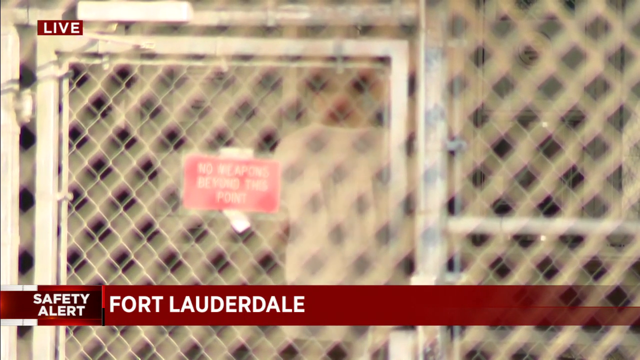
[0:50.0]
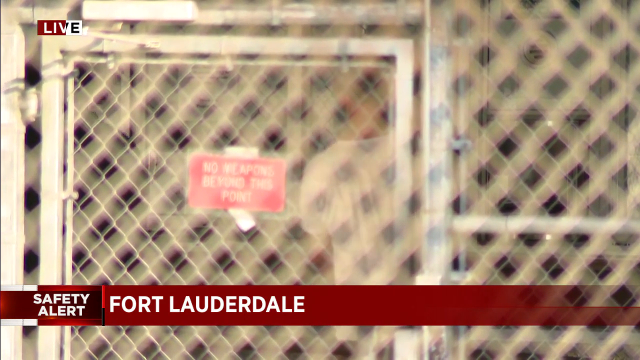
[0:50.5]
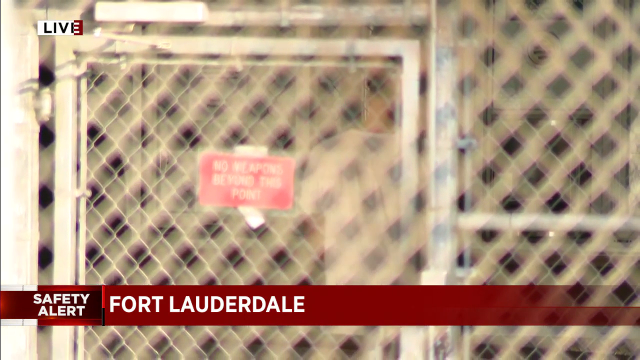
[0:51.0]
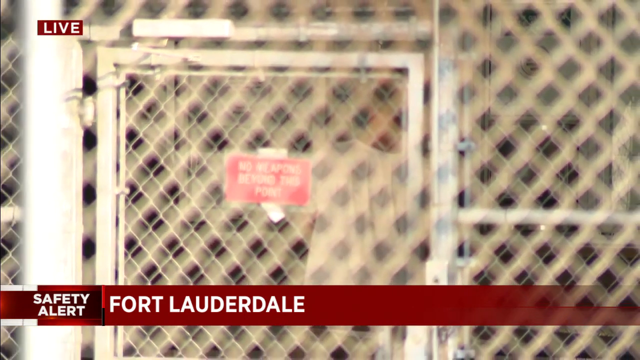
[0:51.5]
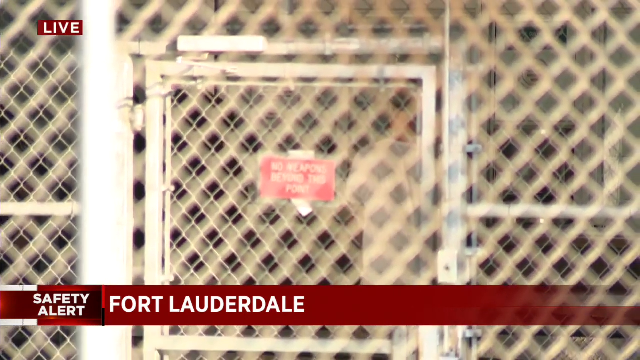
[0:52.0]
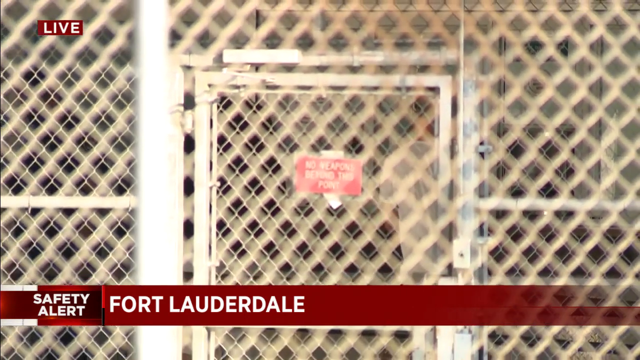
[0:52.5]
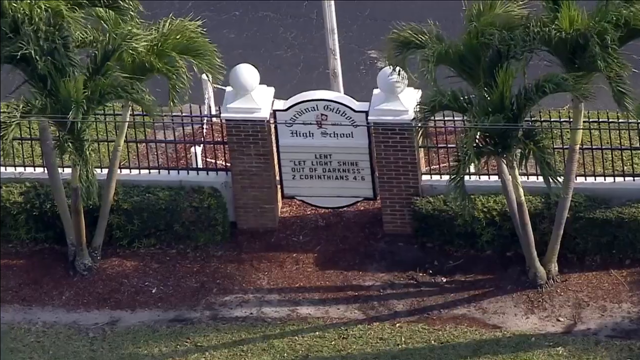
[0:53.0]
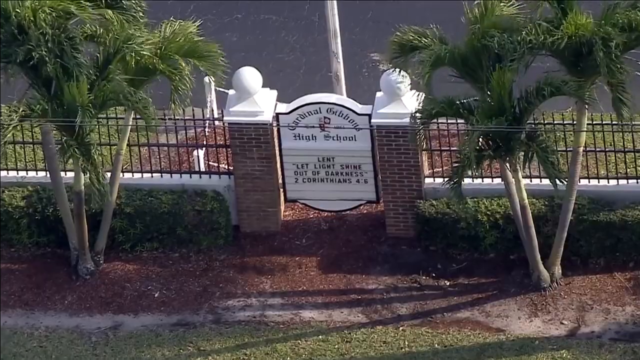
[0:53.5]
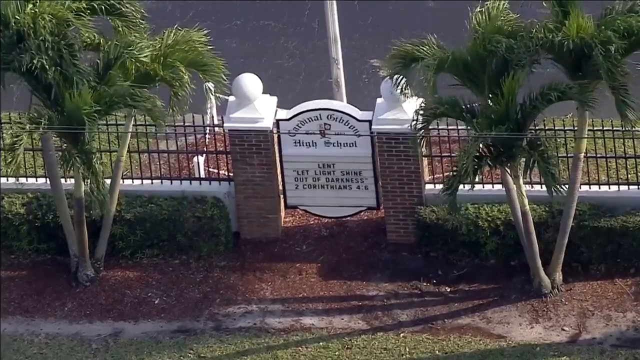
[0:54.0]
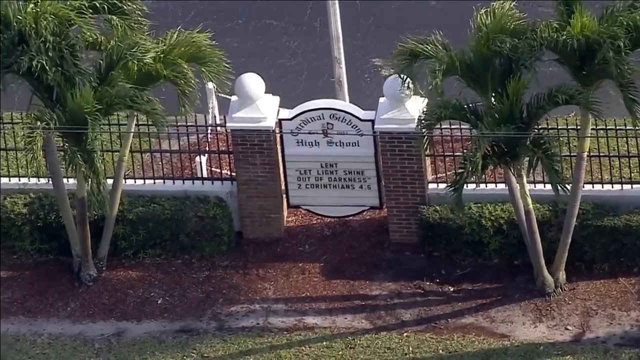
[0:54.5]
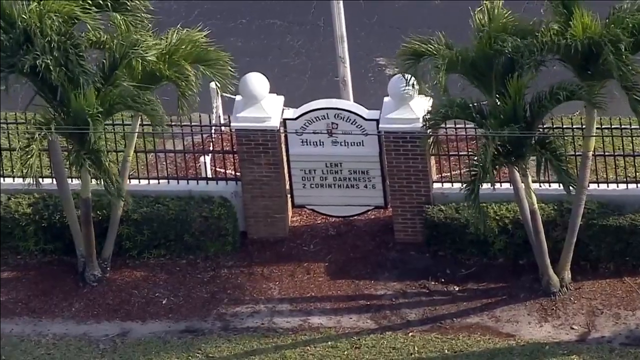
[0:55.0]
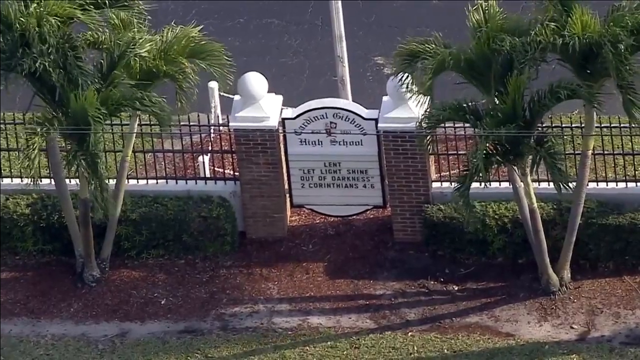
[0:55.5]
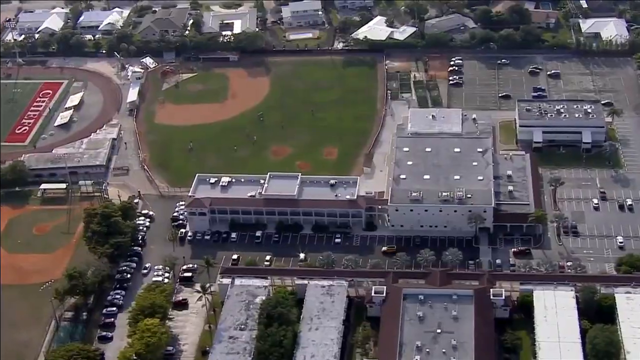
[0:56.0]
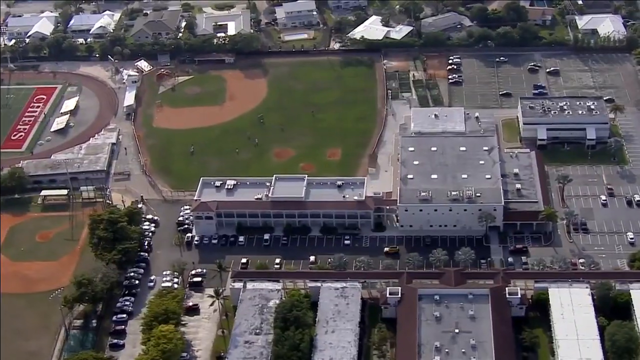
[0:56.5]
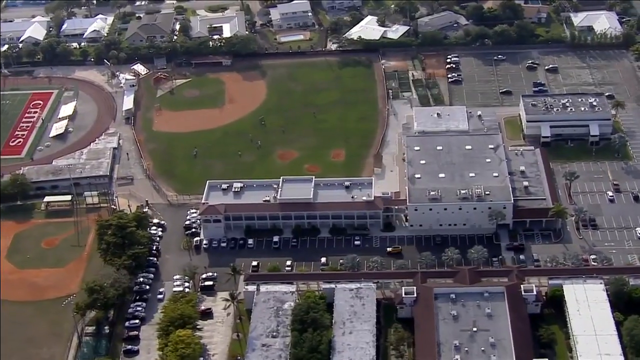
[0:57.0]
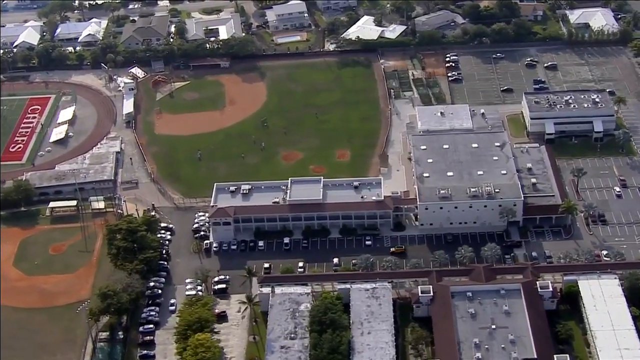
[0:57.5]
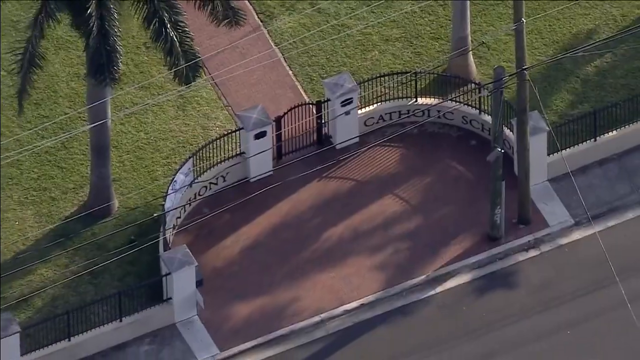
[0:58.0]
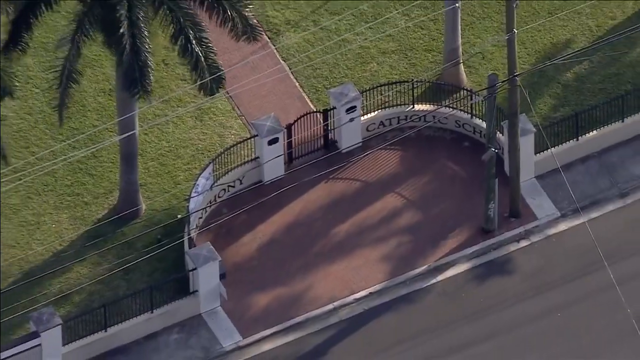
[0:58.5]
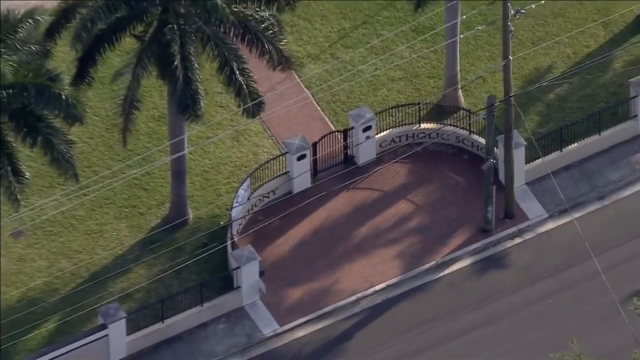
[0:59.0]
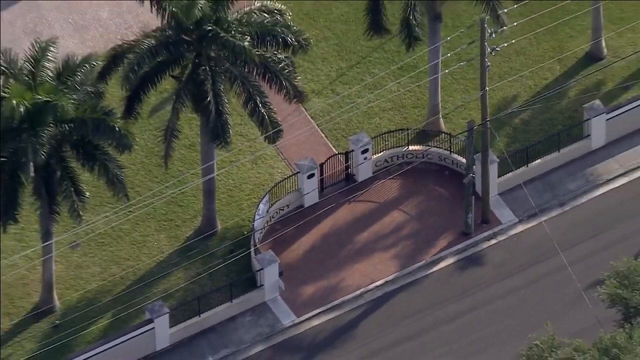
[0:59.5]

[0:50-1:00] Cardinal Gibbons High School is where the incident allegedly took place. The first of four messages from the Fort Lauderdale police reads: "This is a difficult situation for everyone involved the Fort Lauderdale Police Department is shocked and disappointed to learn of the arrest of one of our own. After an investigation by the Broward Sheriff's Office BSO Lewis Walsh was taken into custody on Wednesday."